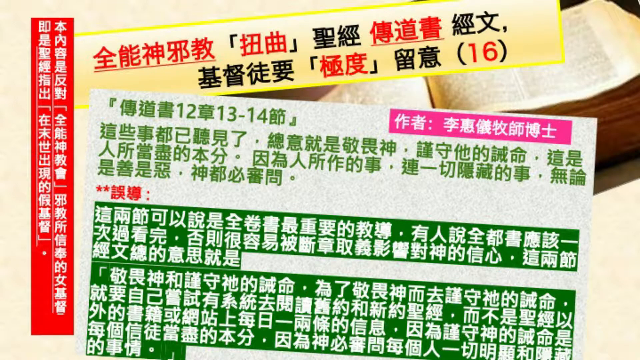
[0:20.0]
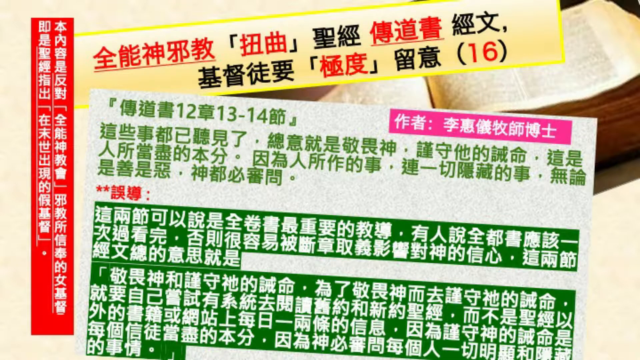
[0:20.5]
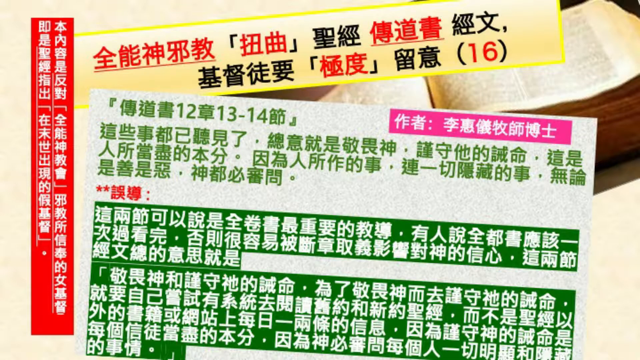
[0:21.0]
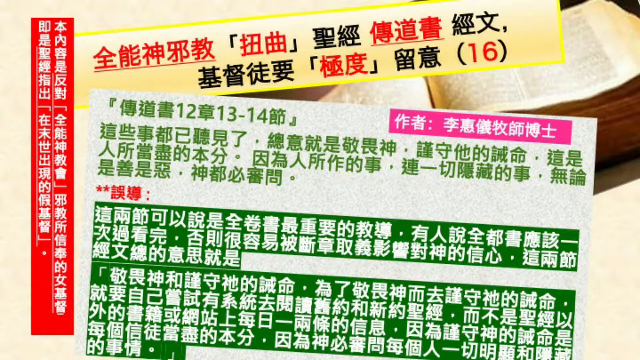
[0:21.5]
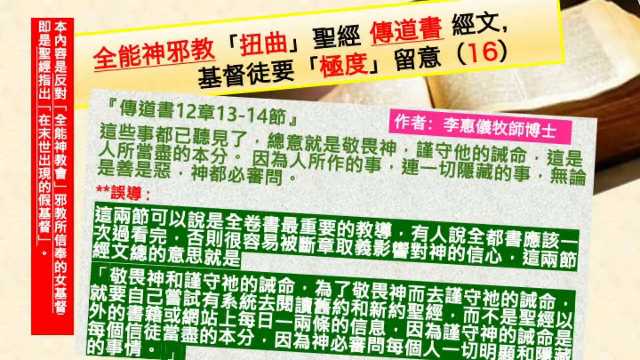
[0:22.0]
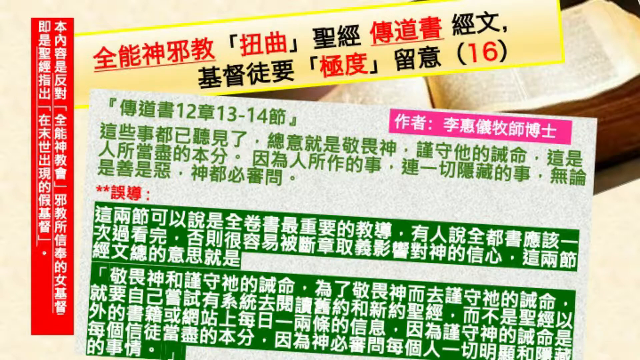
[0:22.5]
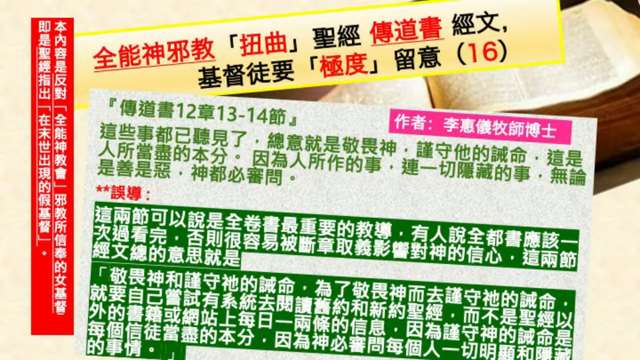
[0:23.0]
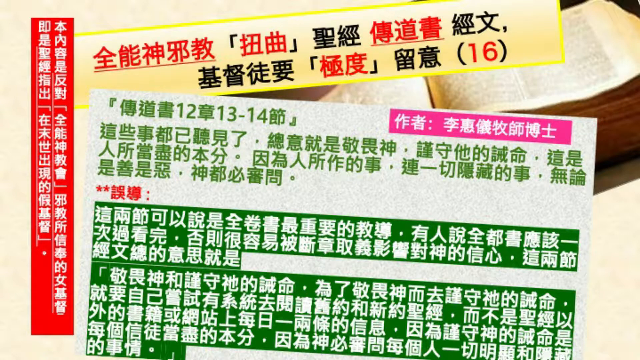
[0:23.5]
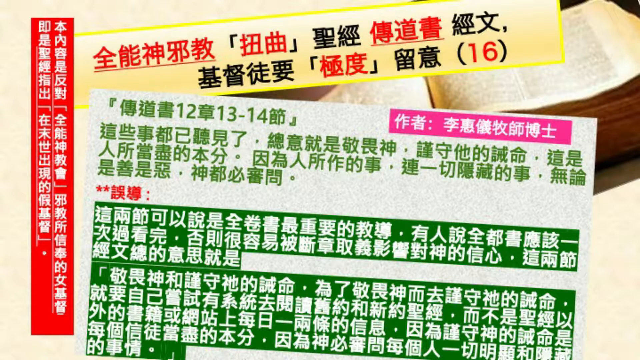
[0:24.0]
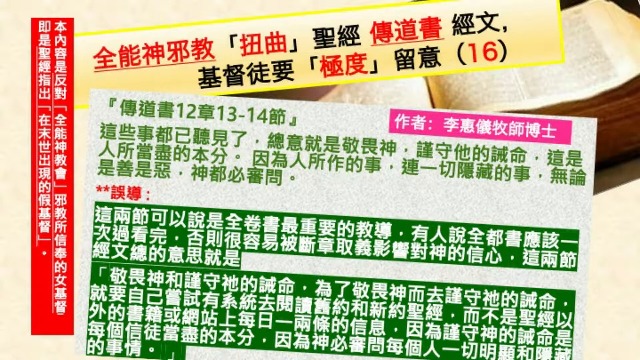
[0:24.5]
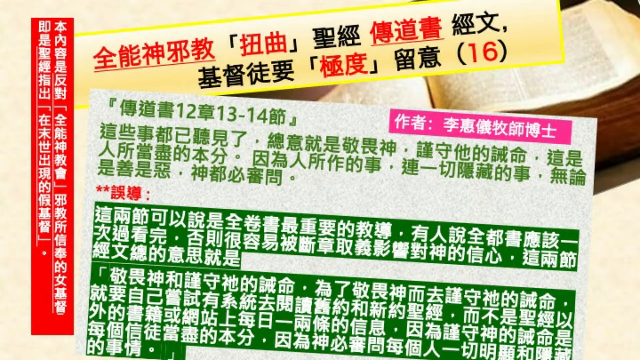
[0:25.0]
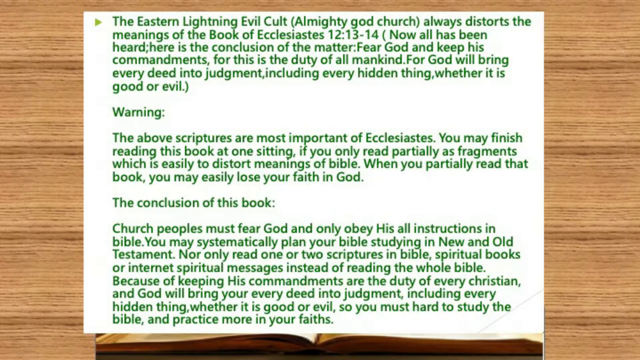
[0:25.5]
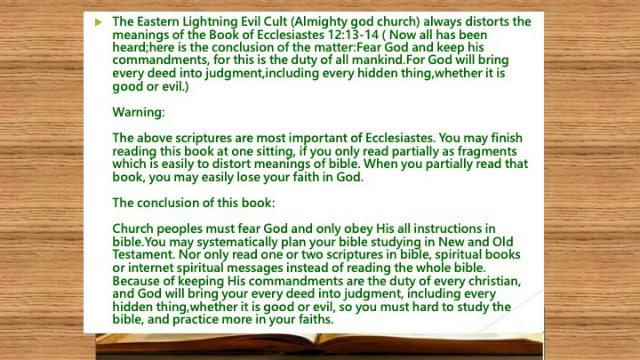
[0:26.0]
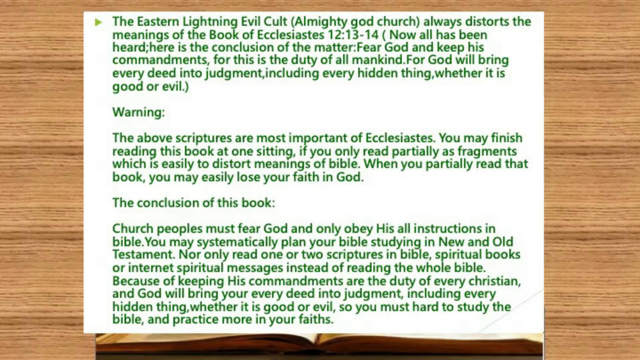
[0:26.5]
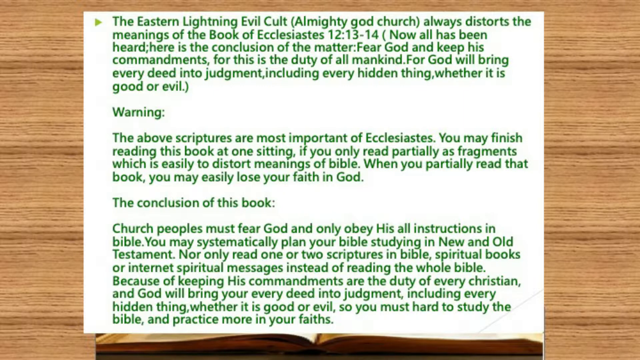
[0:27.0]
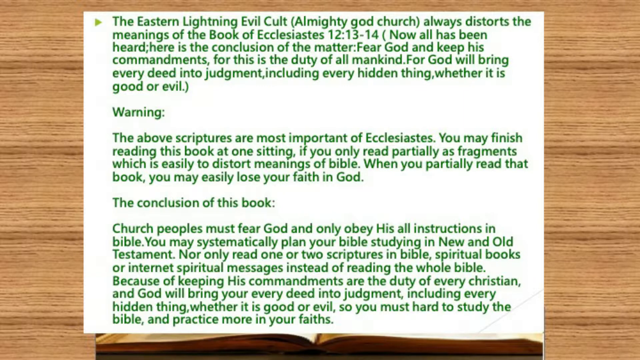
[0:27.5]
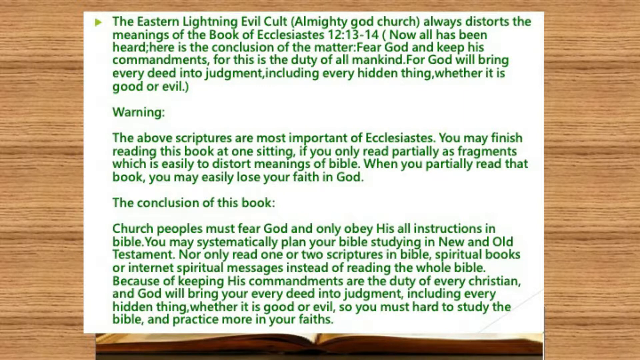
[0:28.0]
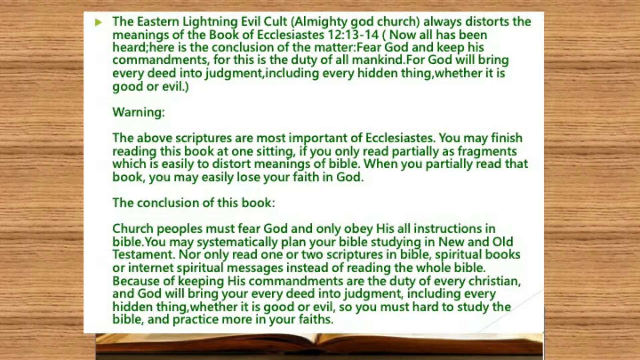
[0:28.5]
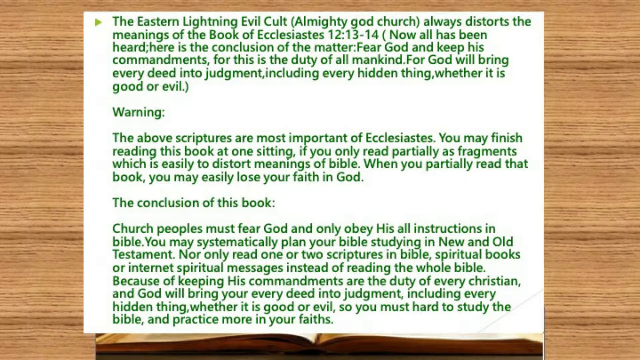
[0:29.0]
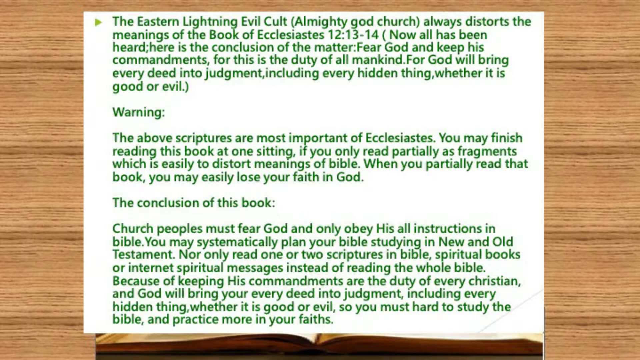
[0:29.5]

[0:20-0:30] An open Bible is shown, opened in the middle, with white pages. Next, a white page with green lettering lies on a brown table. It reads "the Eastern Lighting Evil Cult Almighty God Church always distorts the meaning of the Book of Ecclesiastes" followed by the passage "Now all has been heard, here is the conclusion of the matter, fear God and keep his commandments, for this is the duty of all mankind, for God will bring every deed into judgment, including every hidden thing, whether it is good or evil." A warning follows: "Warning, the above scriptures are most important of Ecclesiastes," along with further text including "When you partially read that book, you may easily lose your faith in God." The text continues on to the conclusion of the book. The video then returns to the first page with the book and lettering in another language.